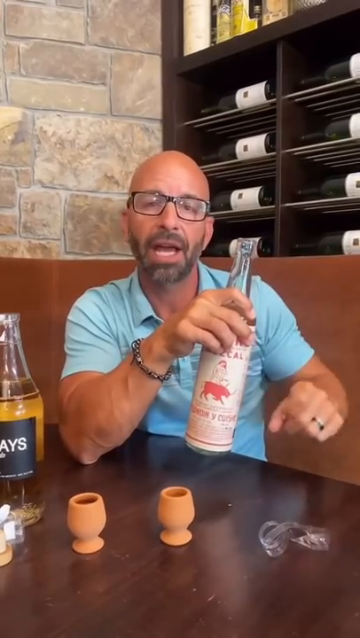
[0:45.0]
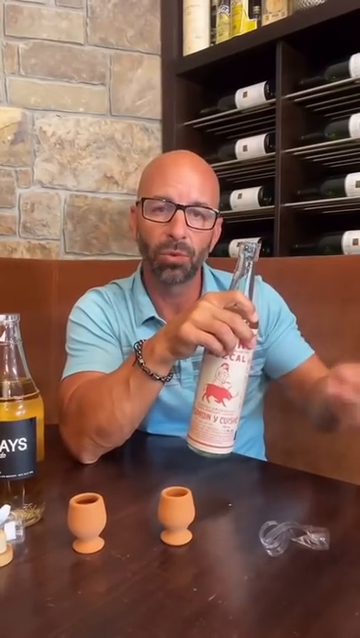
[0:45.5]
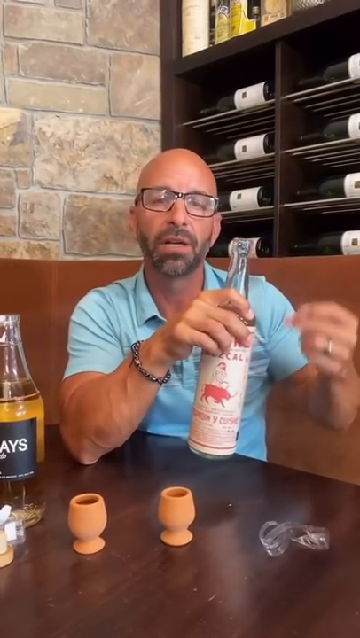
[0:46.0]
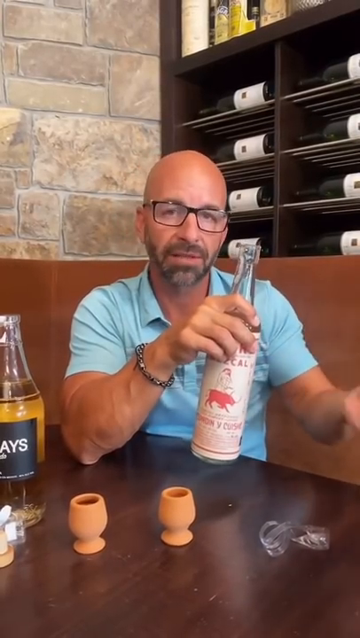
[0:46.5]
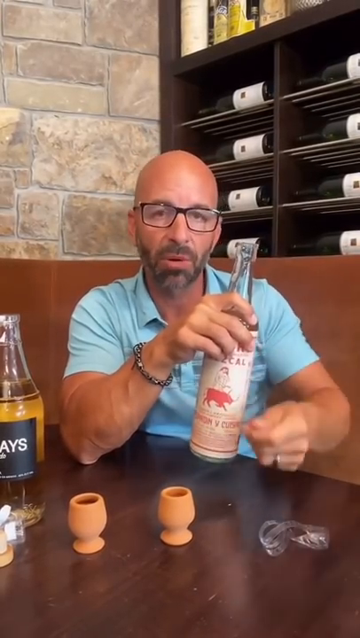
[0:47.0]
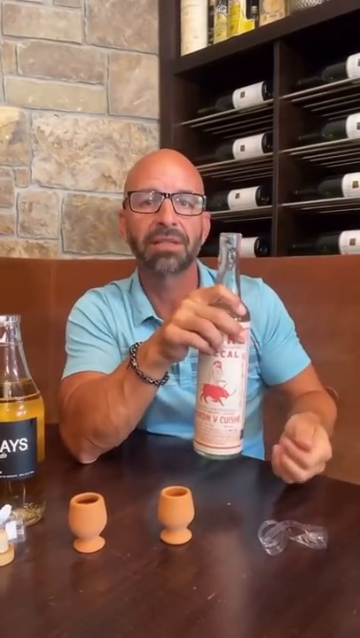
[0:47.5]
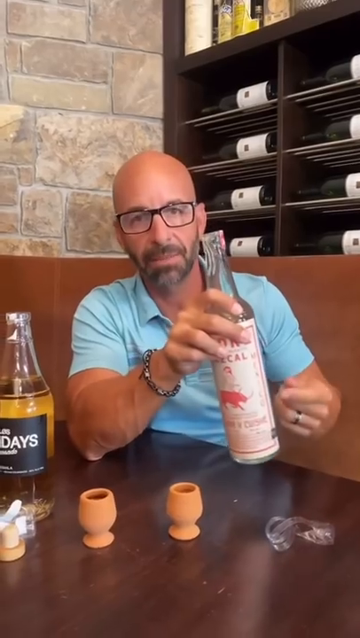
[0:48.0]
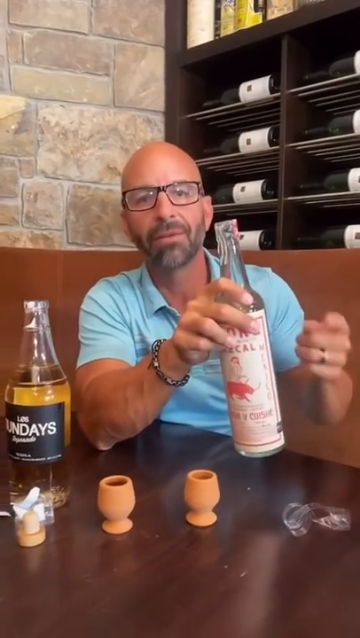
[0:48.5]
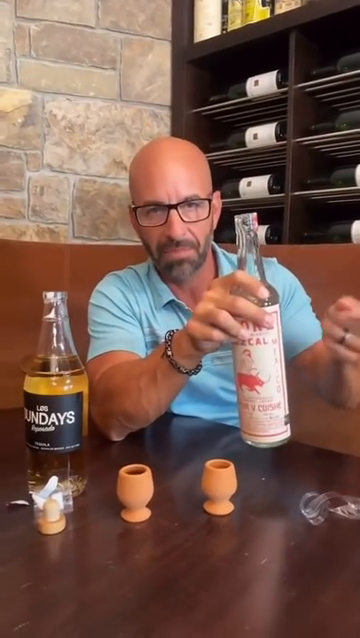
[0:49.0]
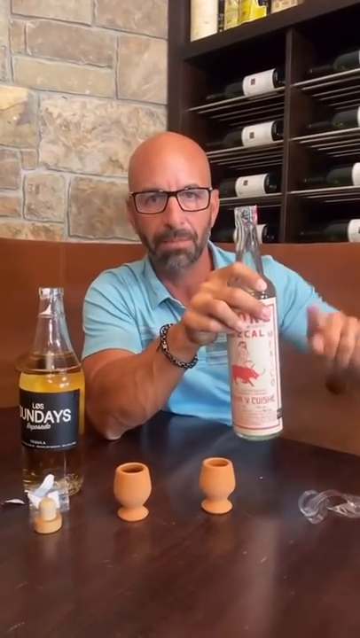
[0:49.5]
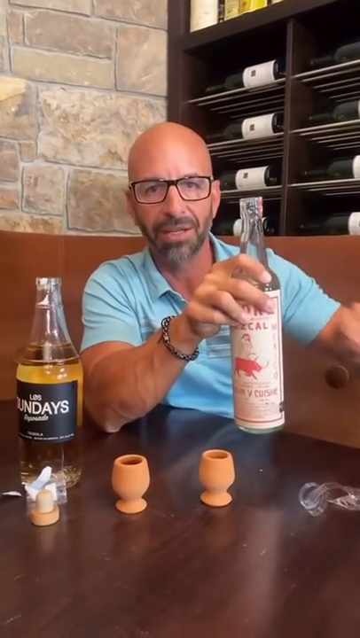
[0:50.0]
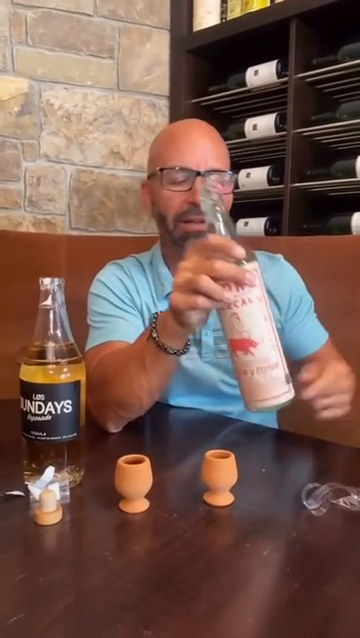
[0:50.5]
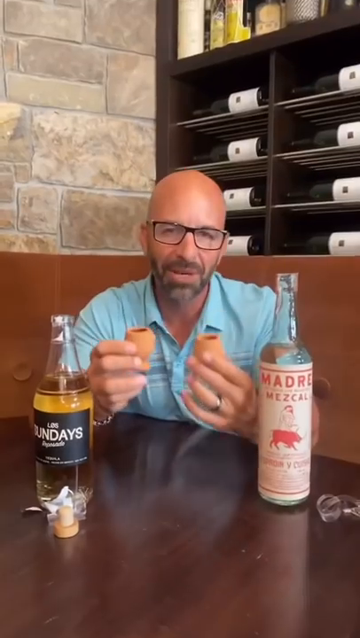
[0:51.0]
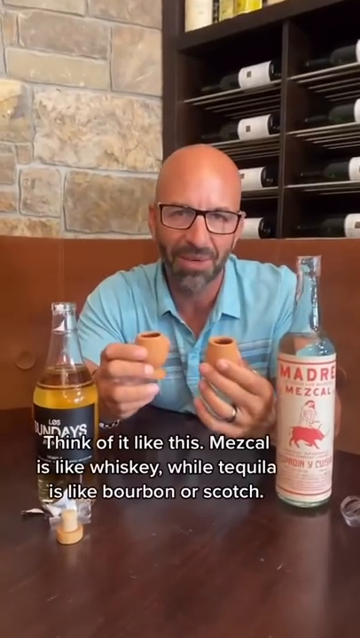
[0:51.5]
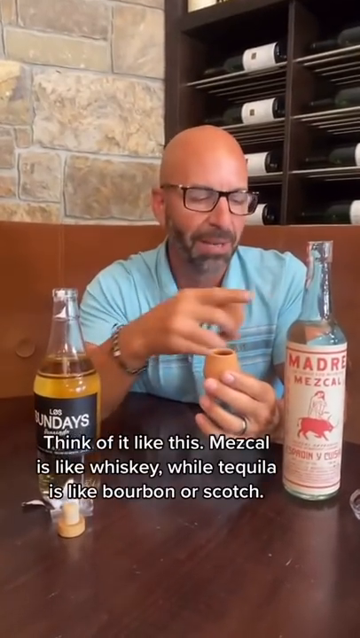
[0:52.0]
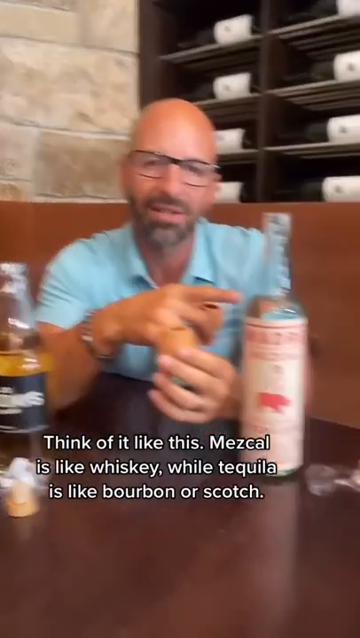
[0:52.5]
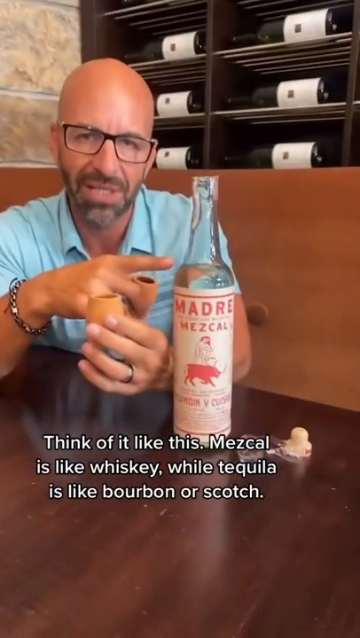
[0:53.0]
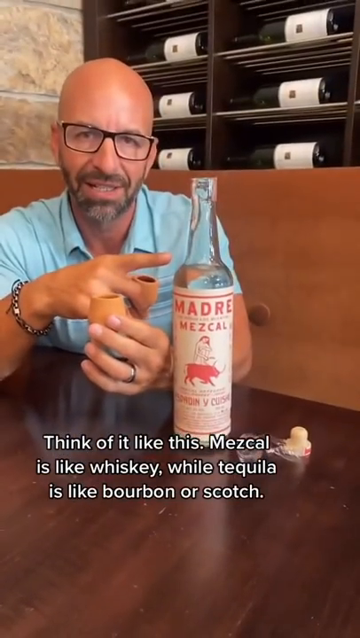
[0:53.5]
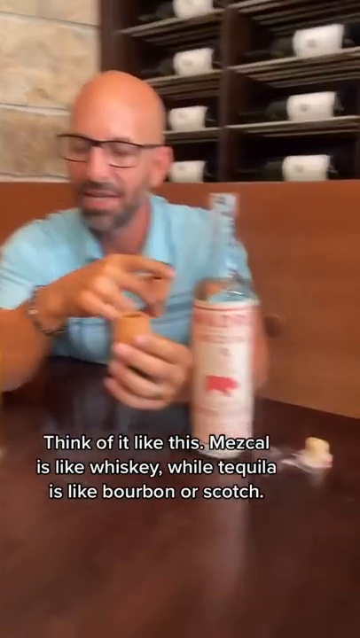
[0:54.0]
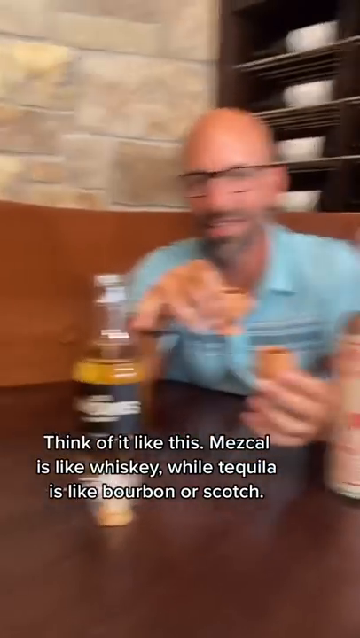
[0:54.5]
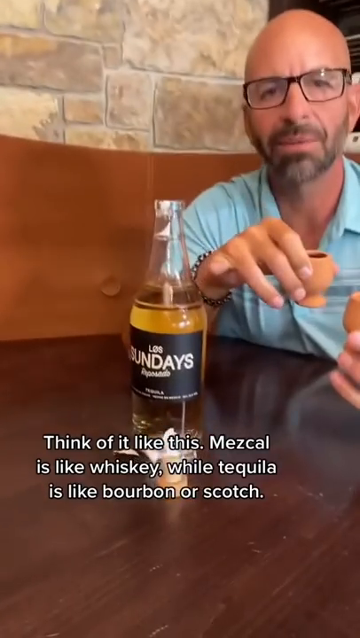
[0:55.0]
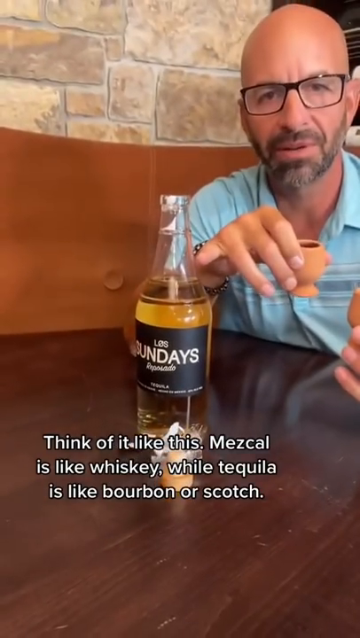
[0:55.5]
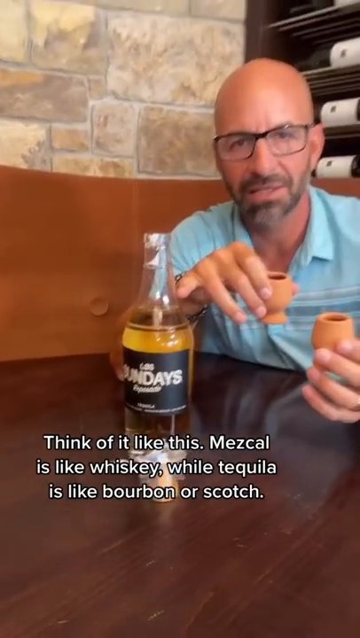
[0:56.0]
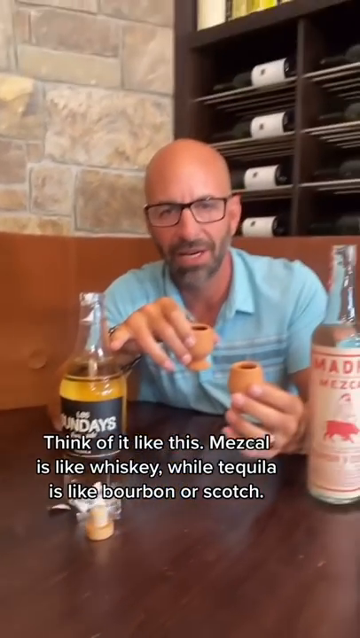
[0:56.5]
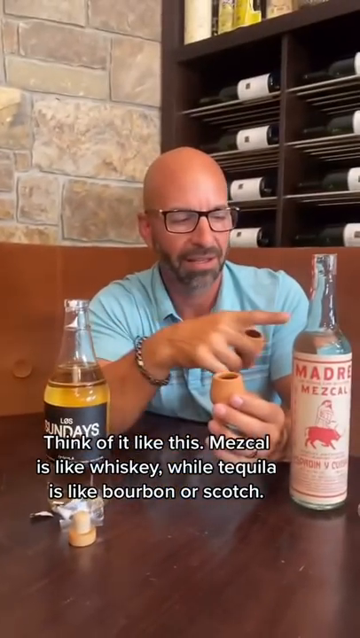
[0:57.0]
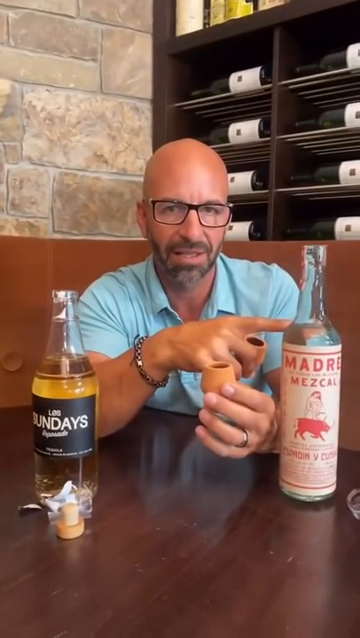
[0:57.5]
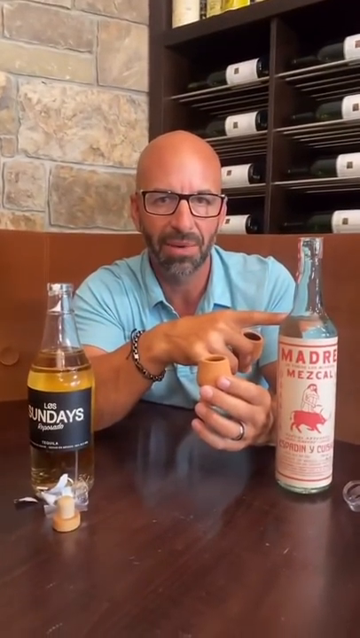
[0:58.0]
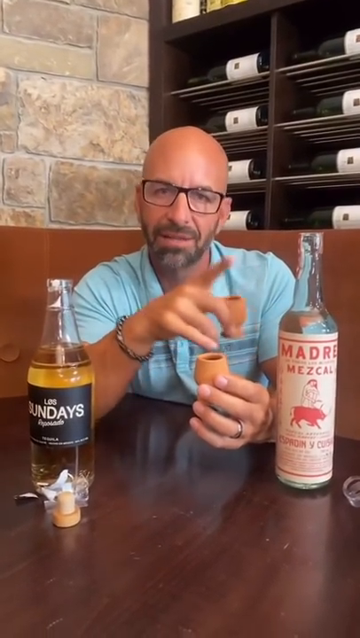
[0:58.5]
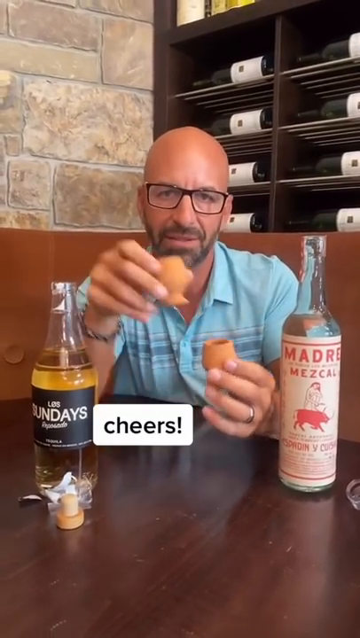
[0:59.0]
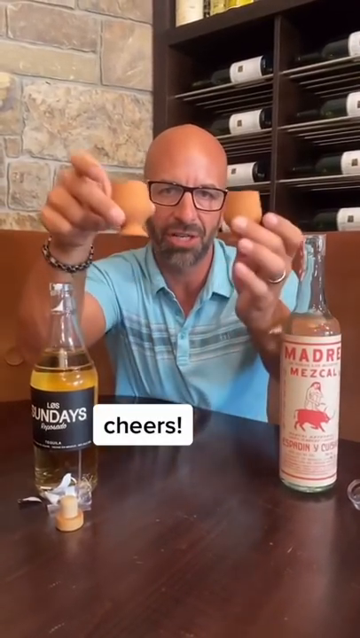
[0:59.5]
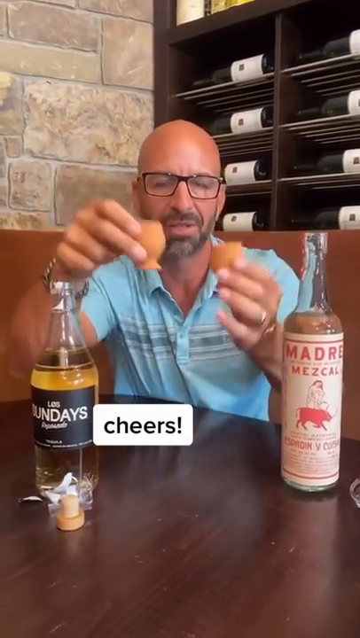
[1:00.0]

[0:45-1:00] The man continues talking about the mezcal. He is bald, with black glasses, a beard and mustache, and a blue shirt, sitting at the corner booth of a bar with bottles of wine behind him. On the table in front of him are an open bottle of tequila, an open bottle of mezcal, and two clay shot glasses. He wears a wedding ring and a bracelet. He moves his hand around and points to the mezcal. It looks like he has poured both, and he says, "think of it like this, mezcal is like whiskey while tequila is like bourbon or scotch," while holding two shot glasses in his hands. He points between the two bottles, then points at the camera, holds up both glasses and says cheers. He starts to bring the shot glasses toward his mouth, but the video cuts off before he drinks.